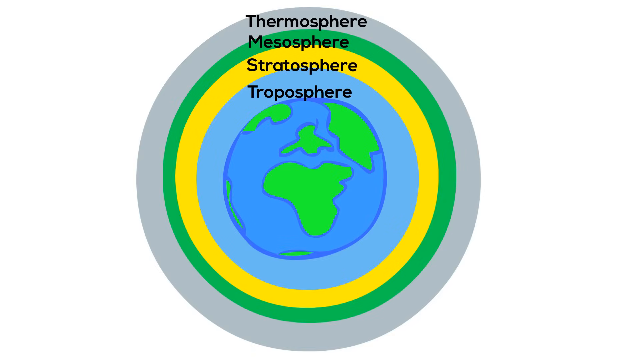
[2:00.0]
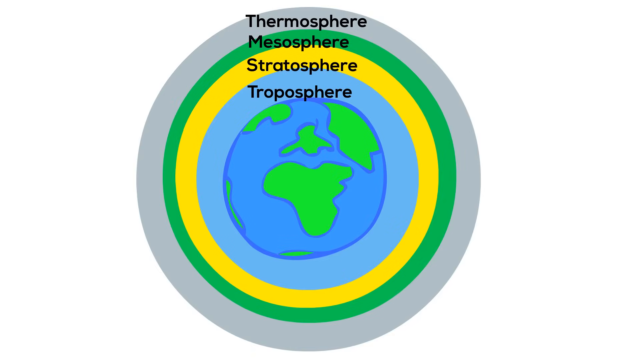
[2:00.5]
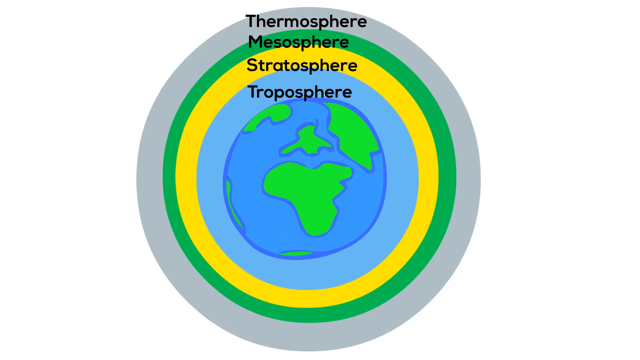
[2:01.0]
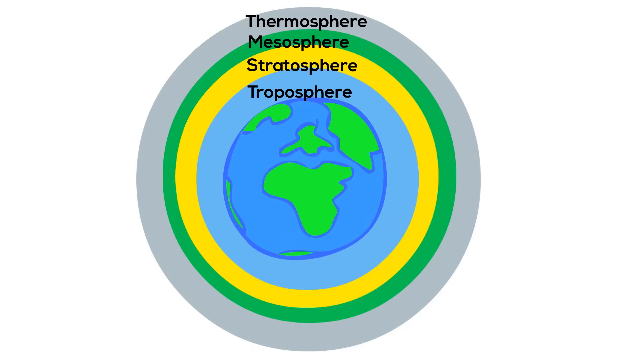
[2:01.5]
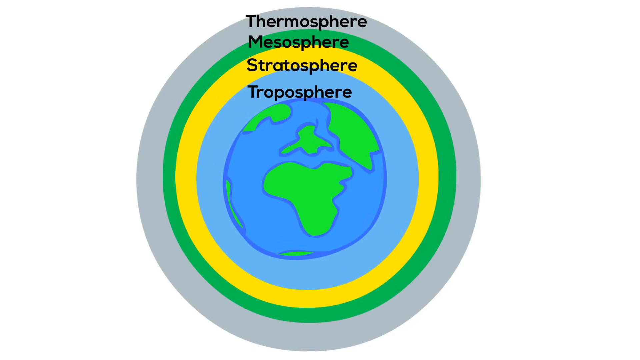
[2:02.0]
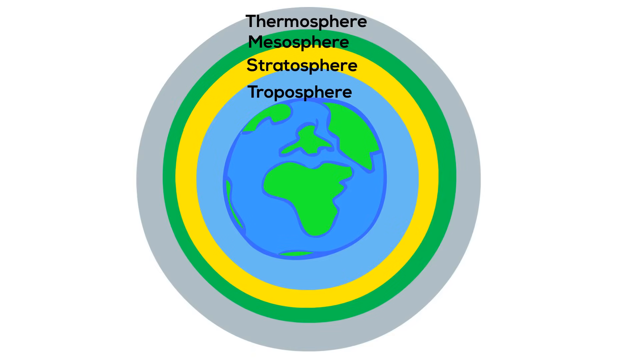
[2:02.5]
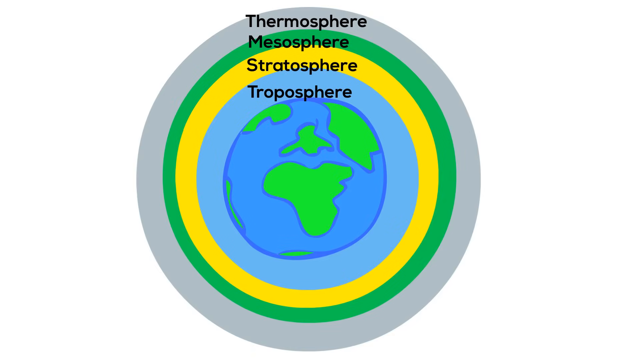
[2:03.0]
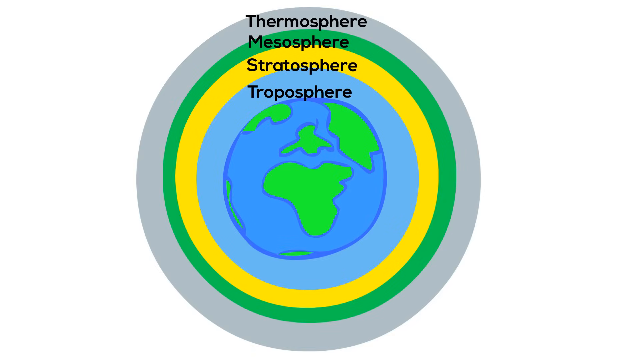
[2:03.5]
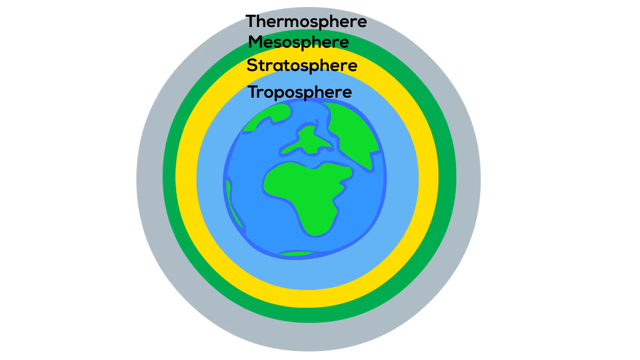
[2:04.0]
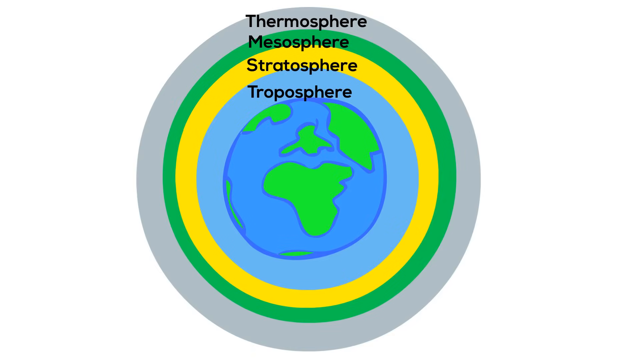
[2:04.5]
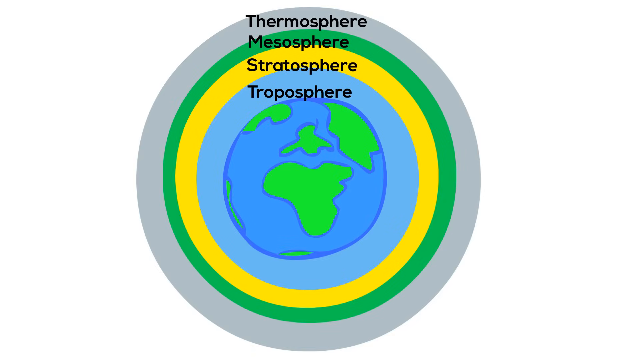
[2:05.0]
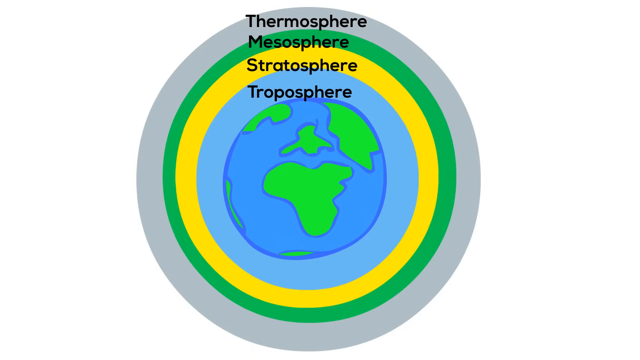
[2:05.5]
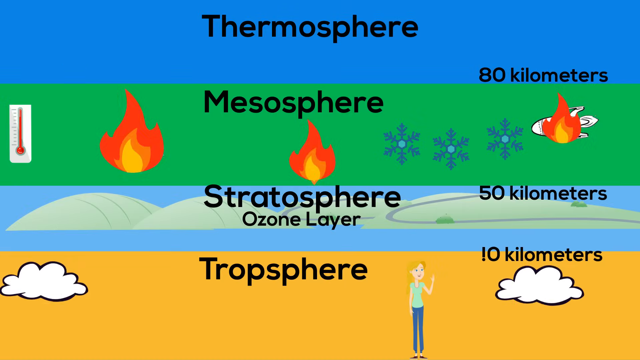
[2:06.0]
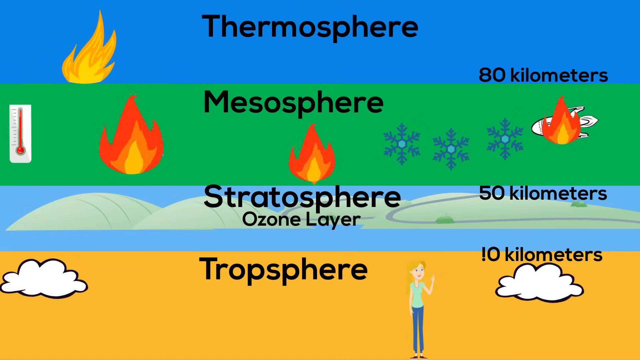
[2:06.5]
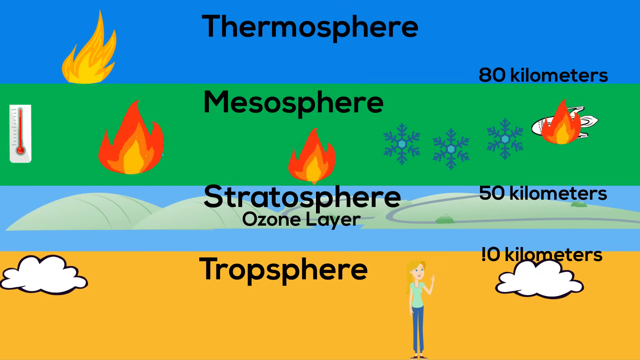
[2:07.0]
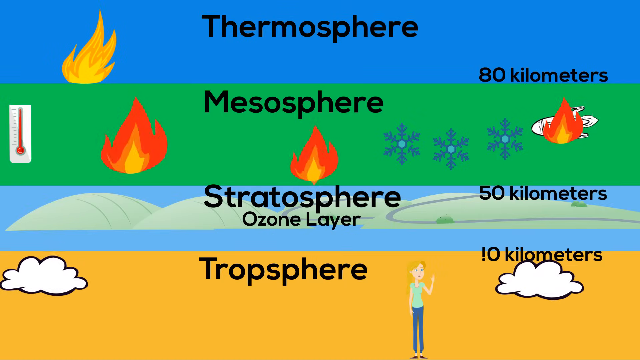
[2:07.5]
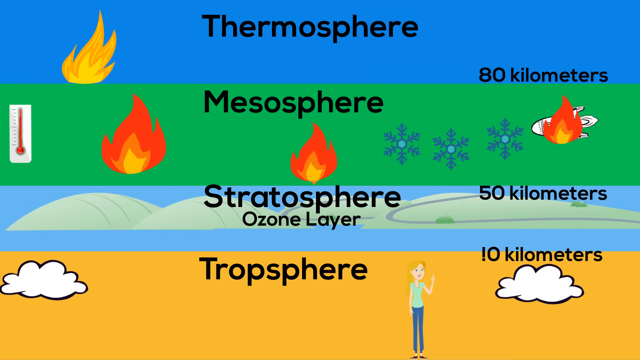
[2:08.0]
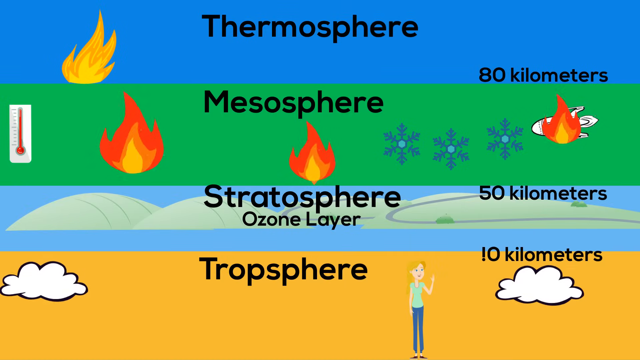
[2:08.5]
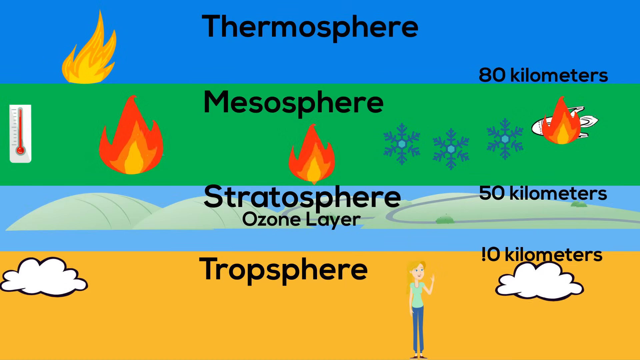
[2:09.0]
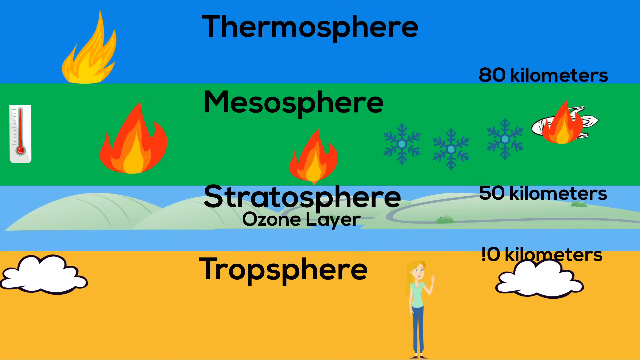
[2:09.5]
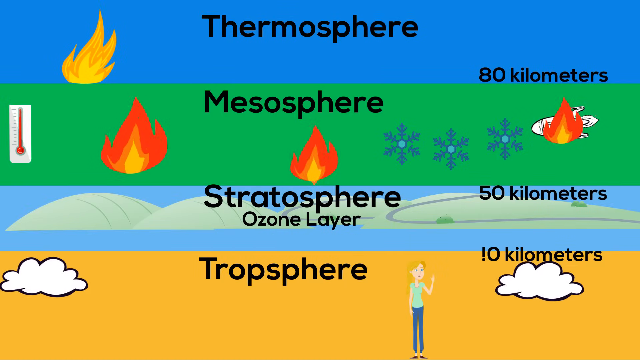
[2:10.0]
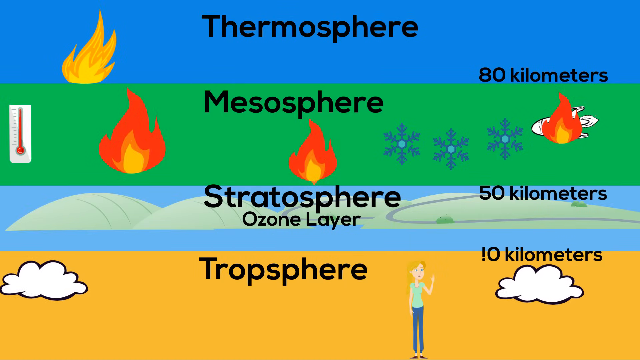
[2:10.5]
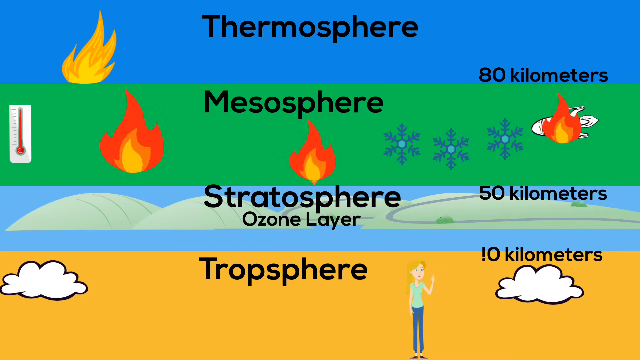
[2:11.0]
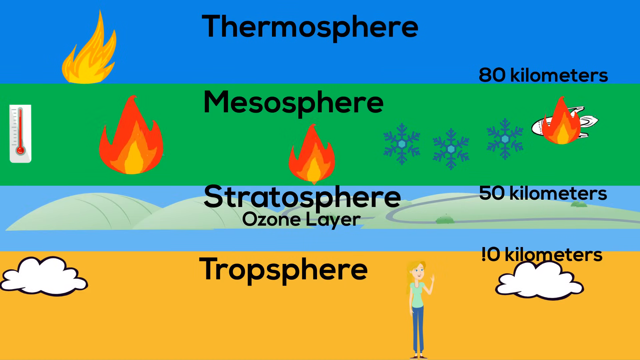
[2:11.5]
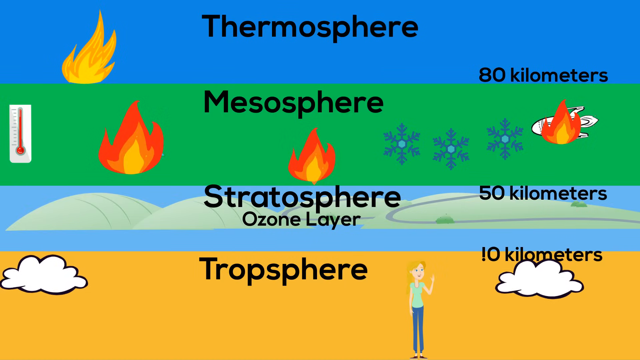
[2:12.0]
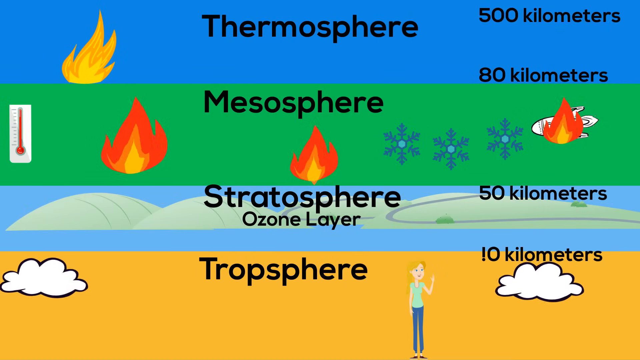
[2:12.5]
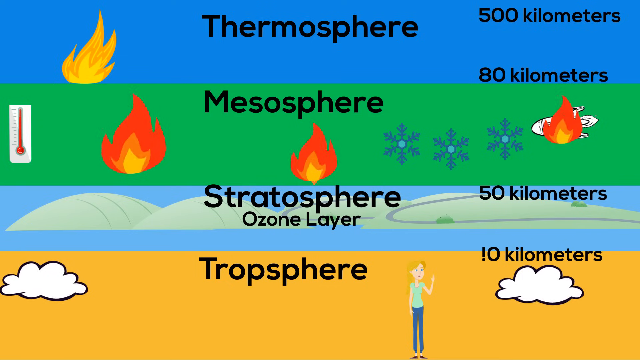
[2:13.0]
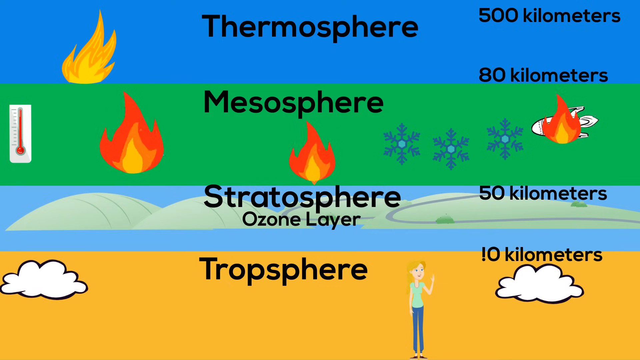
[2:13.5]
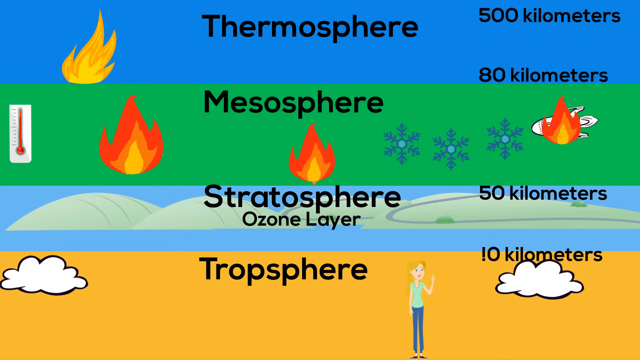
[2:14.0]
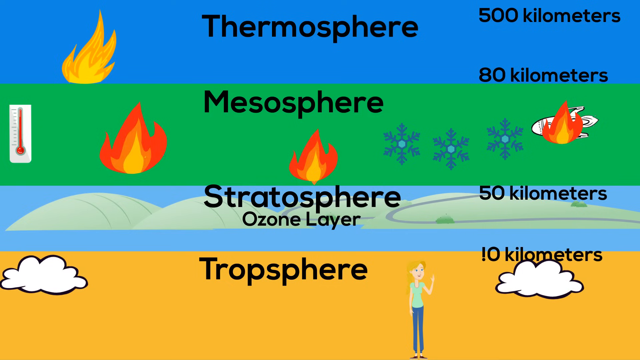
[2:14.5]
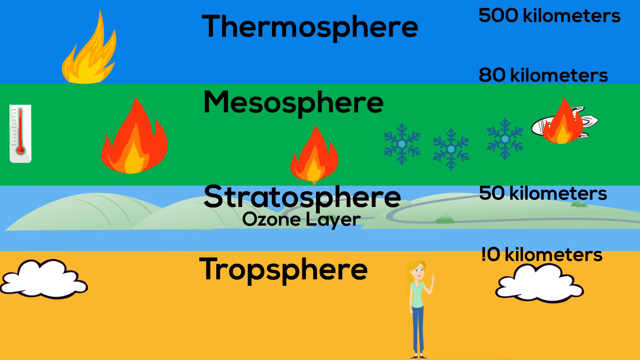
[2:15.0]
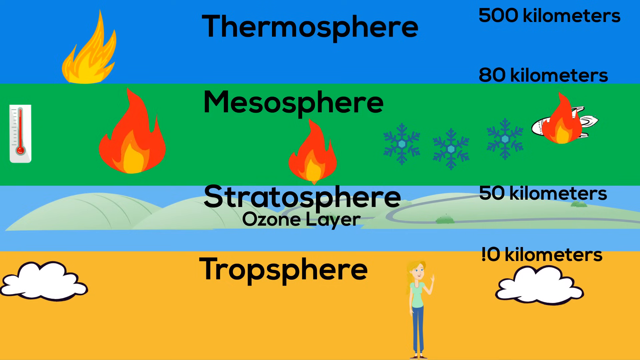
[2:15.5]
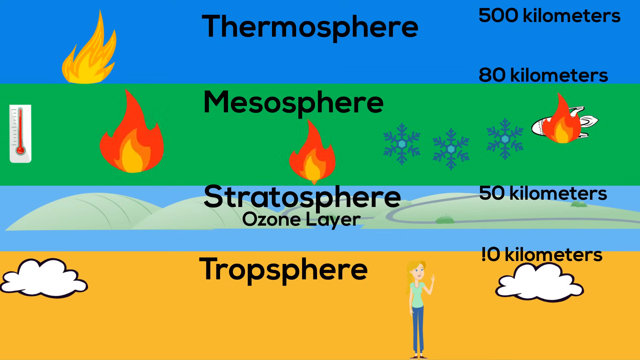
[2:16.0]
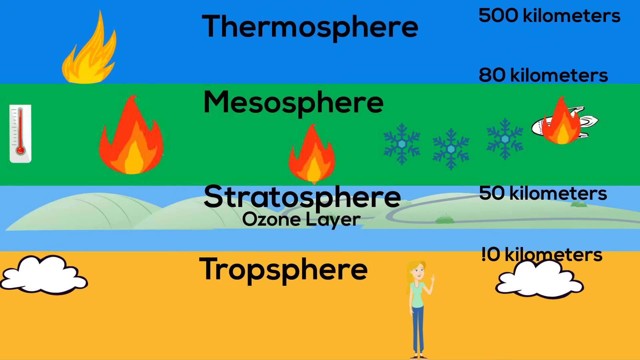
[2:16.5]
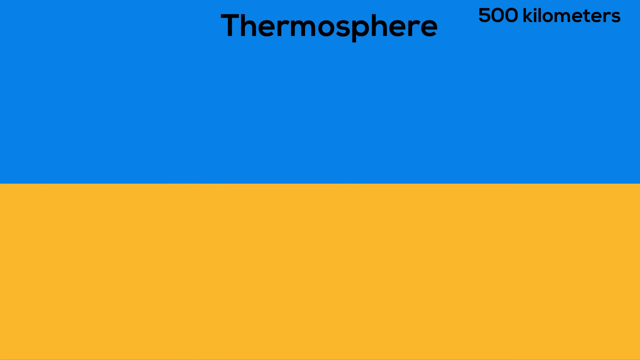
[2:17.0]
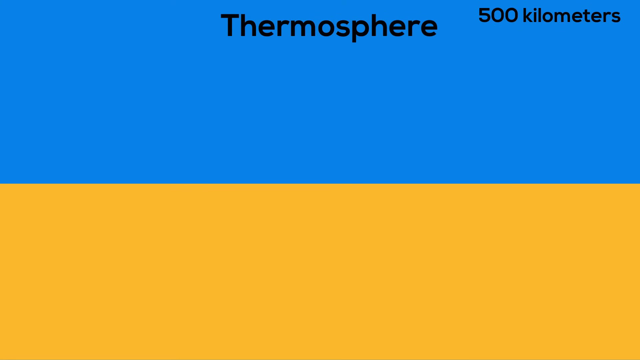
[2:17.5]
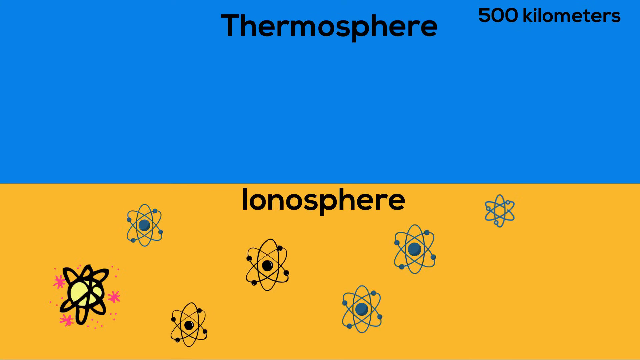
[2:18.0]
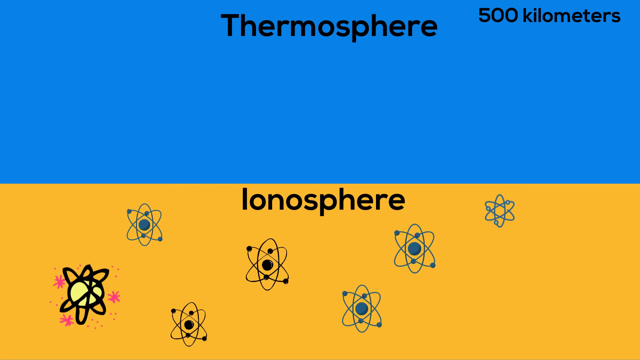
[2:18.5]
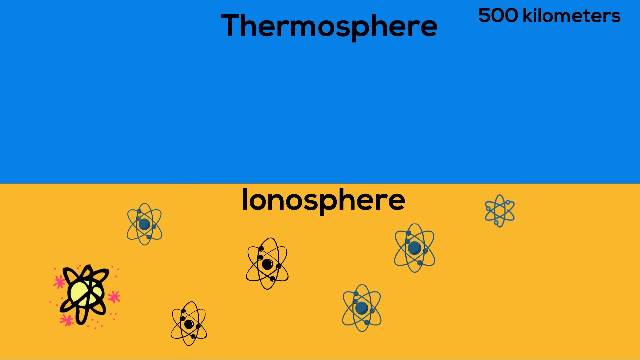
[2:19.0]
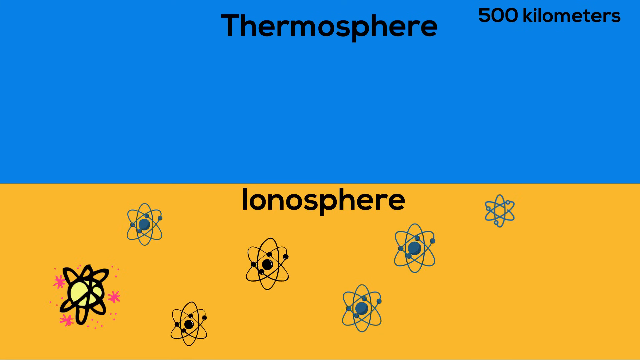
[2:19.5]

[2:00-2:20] The layer diagram from the beginning returns, showing the stratosphere, troposphere, mesosphere, and thermosphere around the Earth. Then the stacked diagram comes back, with the troposphere at the bottom, the stratosphere and ozone layer above it, the mesosphere after that, and now the thermosphere added, with 80 kilometers from ground marked. The thermosphere contains only a yellow and orange flame, and it is apparently 500 kilometers from ground. All four layers are stacked on top of each other. A new layer called the ionosphere is then brought in at the bottom.